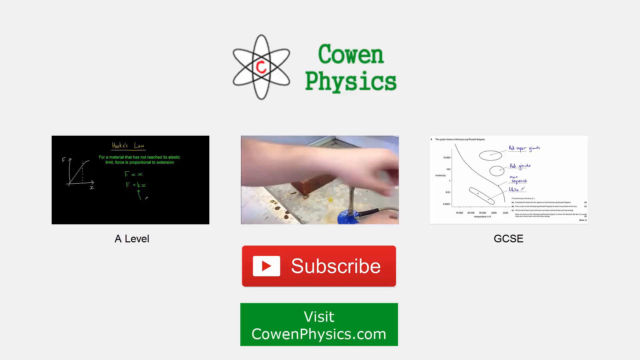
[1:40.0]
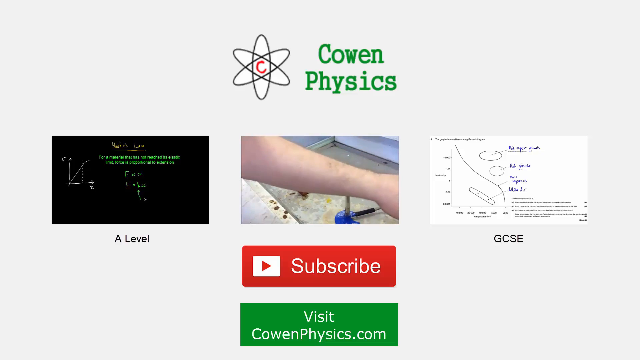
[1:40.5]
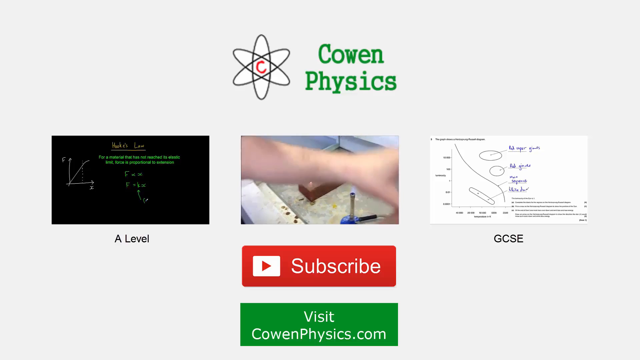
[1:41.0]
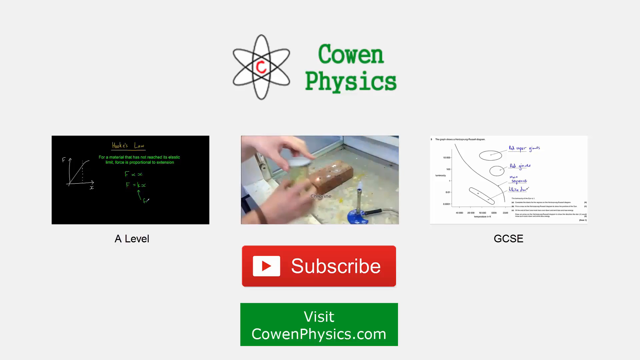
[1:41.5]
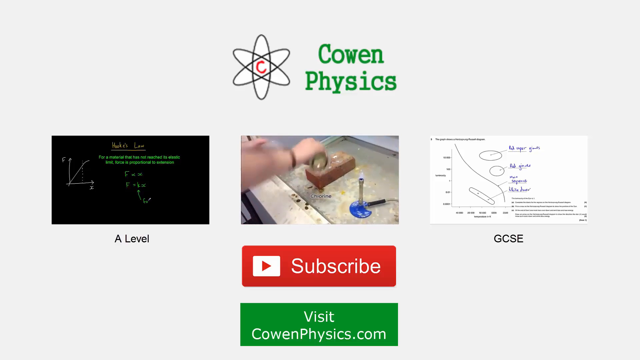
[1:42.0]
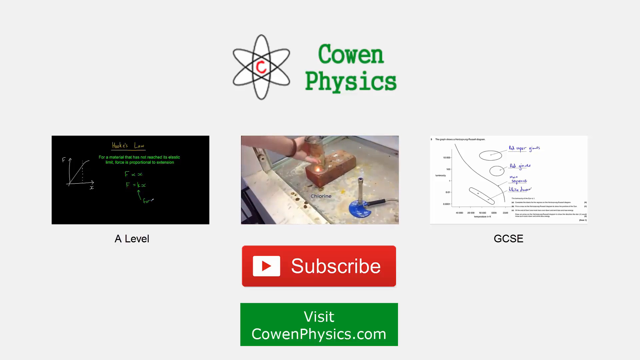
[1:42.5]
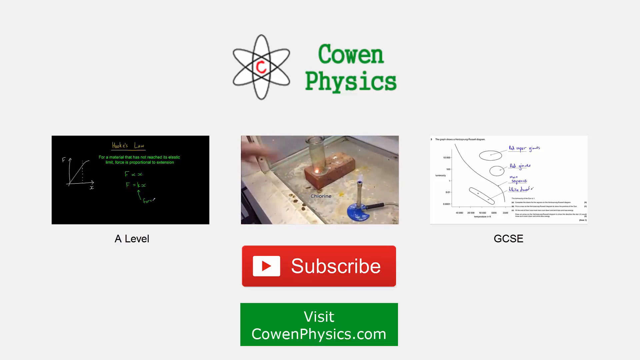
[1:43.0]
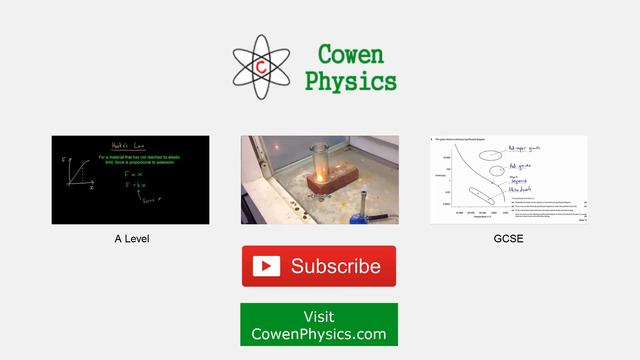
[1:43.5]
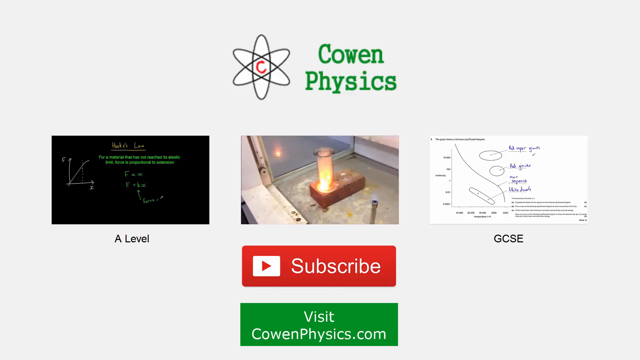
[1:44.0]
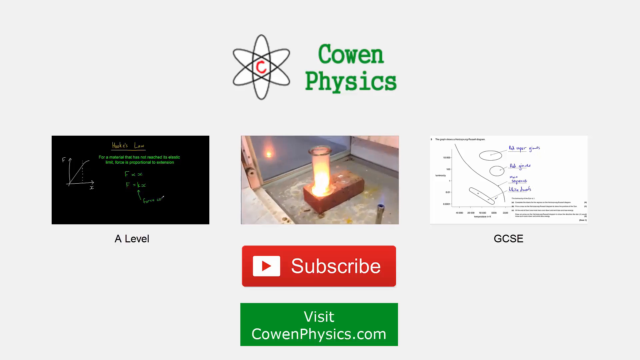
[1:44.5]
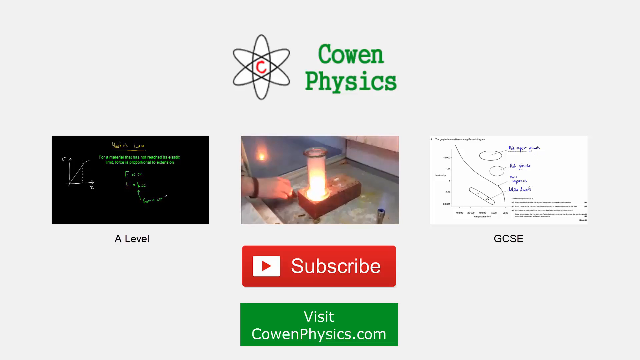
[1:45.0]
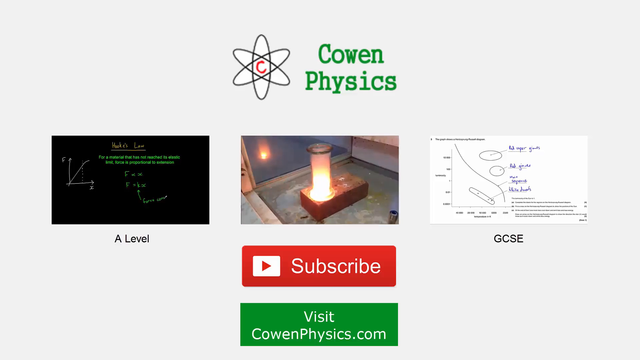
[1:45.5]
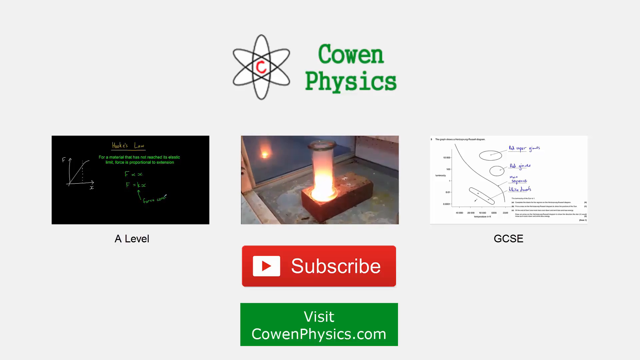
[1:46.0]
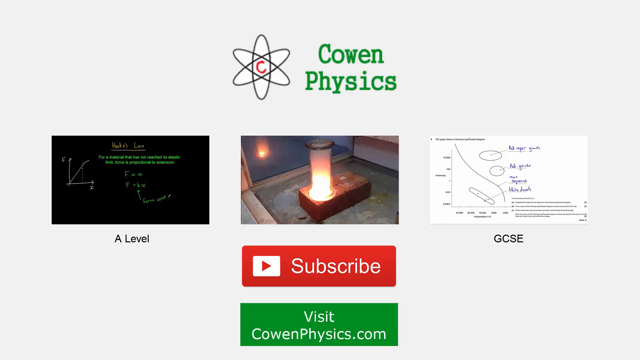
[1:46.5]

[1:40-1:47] The Cohen Physics outro page remains on screen. The center video preview shows some sort of science experiment in which someone pours some sort of liquid onto a brick, it ignites, and a glass is placed on top of the brick. On the left, a video preview shows a black screen with green writing, labeled "A Level" underneath; on the right, a preview shows a white background with black text and purple pen markups, labeled "GCSE". The Cohen Physics logo is neon green, with a C in the middle of three oval designs arranged in a circle, apparently creating an animation of 3D movement on the left side of the logo's writing. The screen stays like this until the video ends abruptly once the flame has ignited in the center preview.